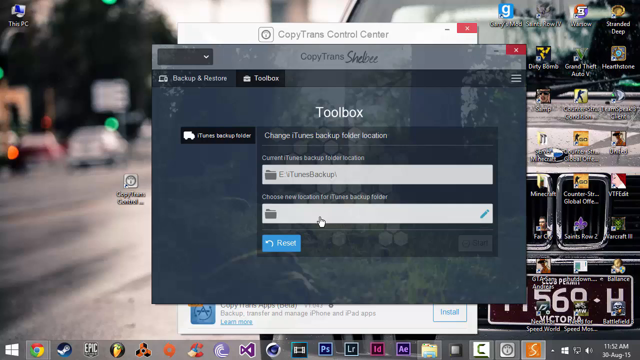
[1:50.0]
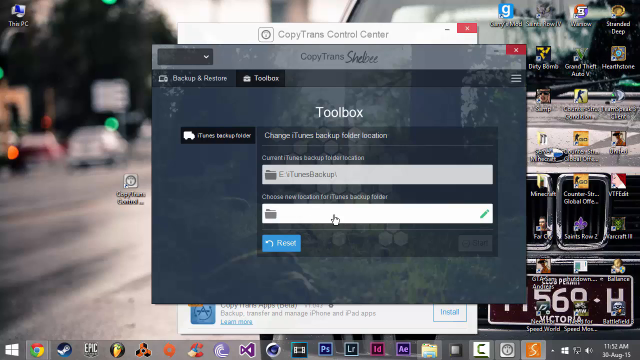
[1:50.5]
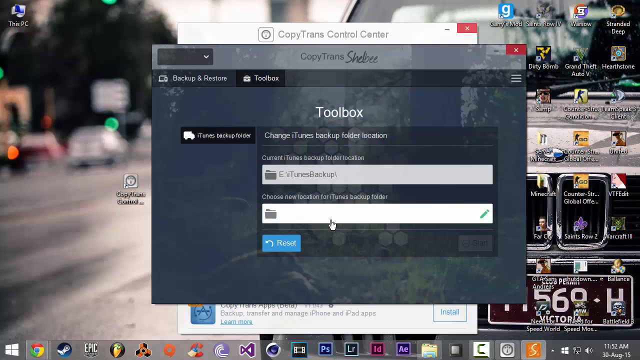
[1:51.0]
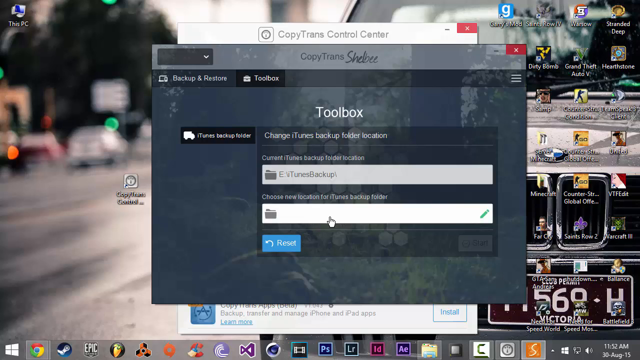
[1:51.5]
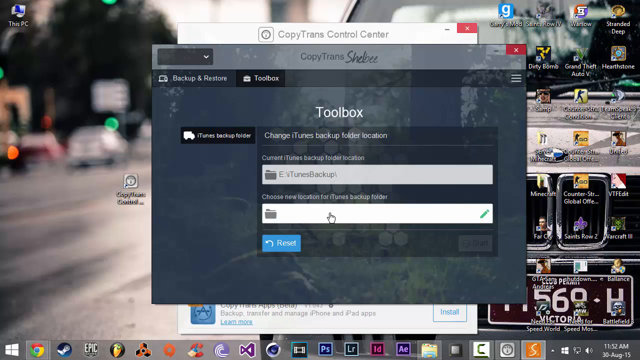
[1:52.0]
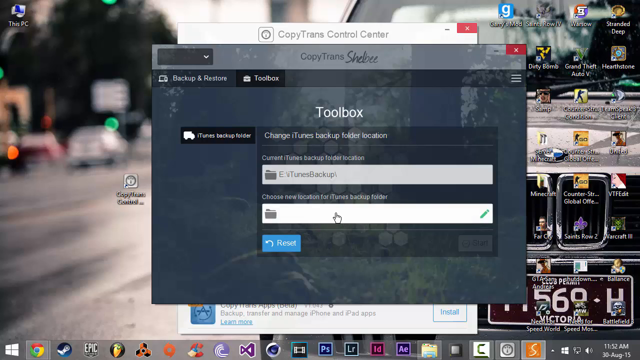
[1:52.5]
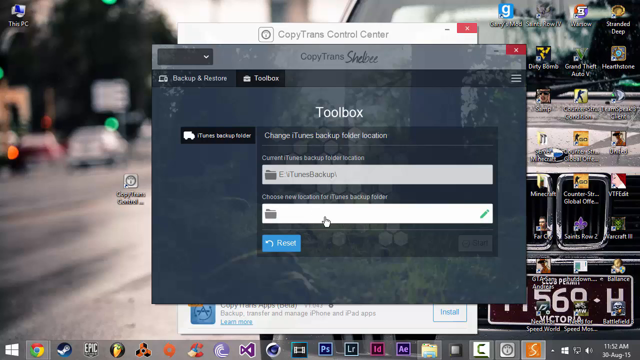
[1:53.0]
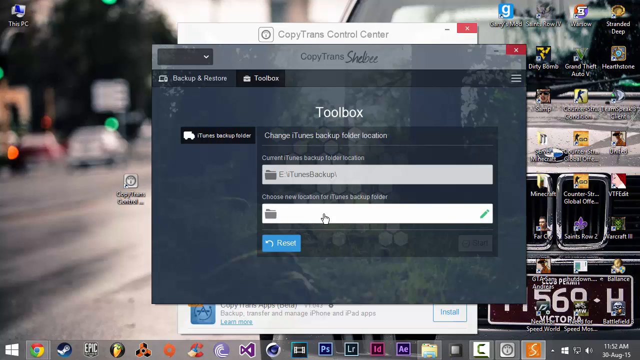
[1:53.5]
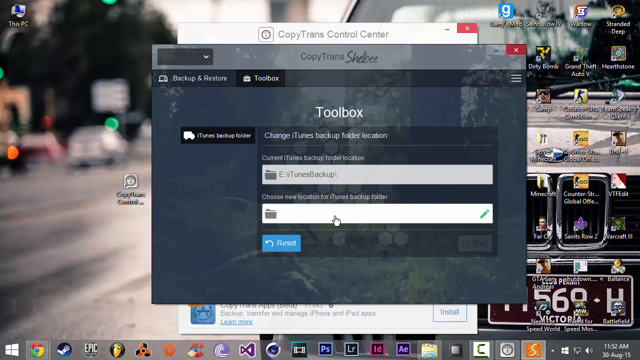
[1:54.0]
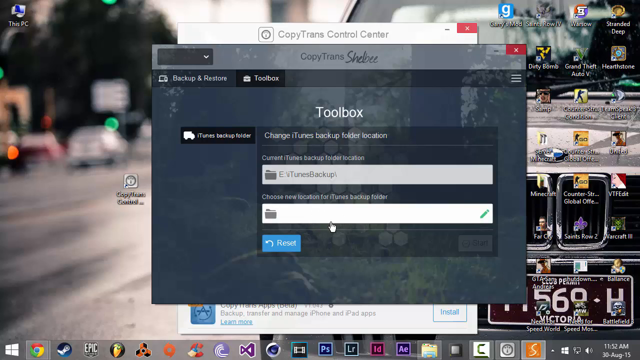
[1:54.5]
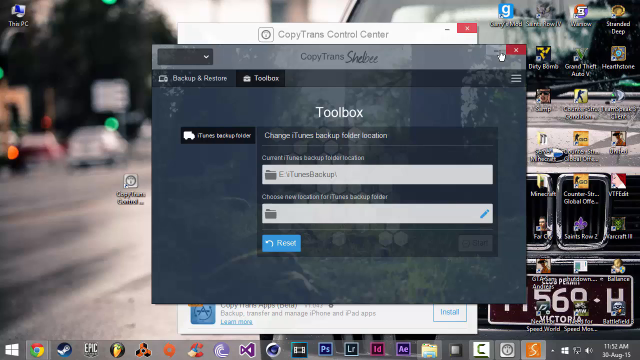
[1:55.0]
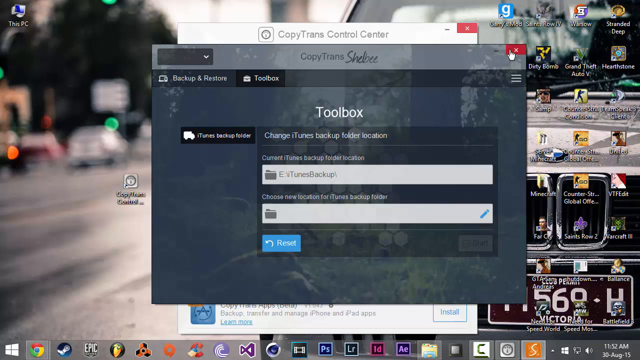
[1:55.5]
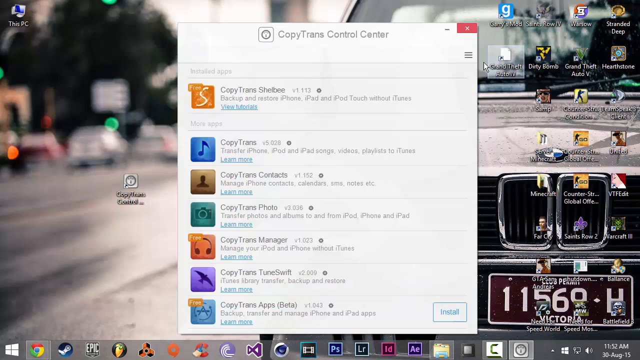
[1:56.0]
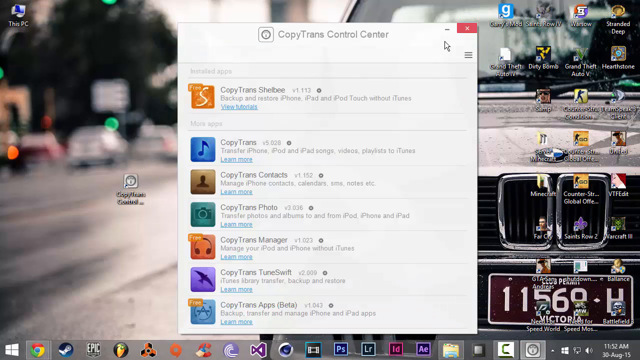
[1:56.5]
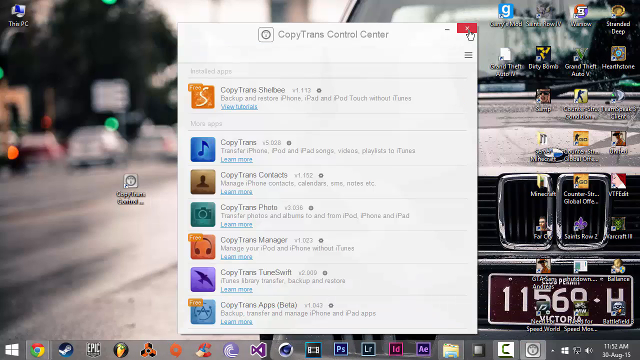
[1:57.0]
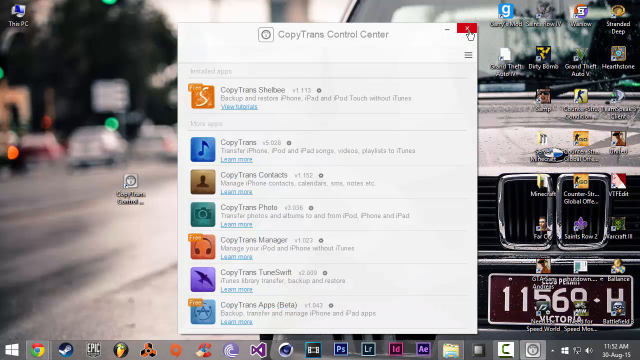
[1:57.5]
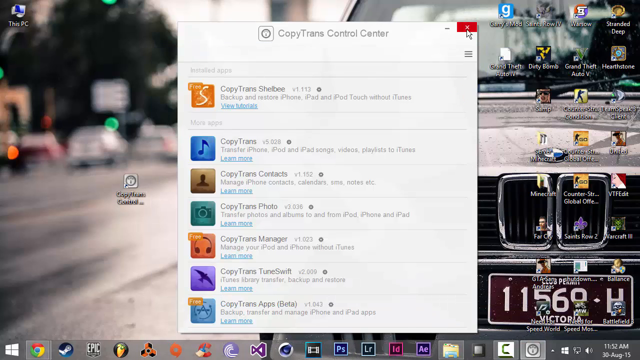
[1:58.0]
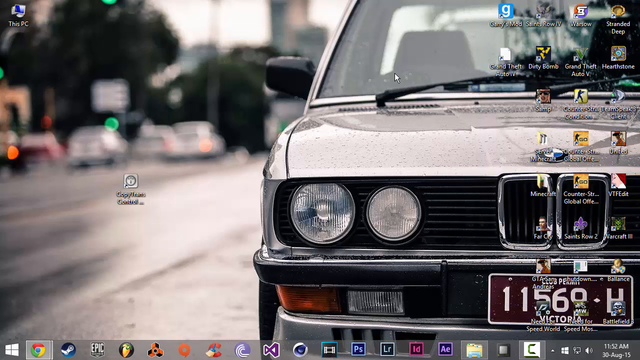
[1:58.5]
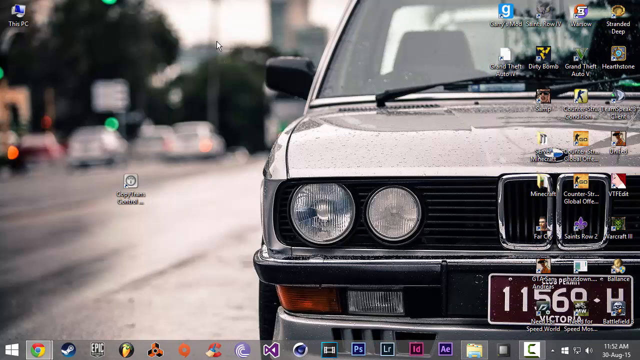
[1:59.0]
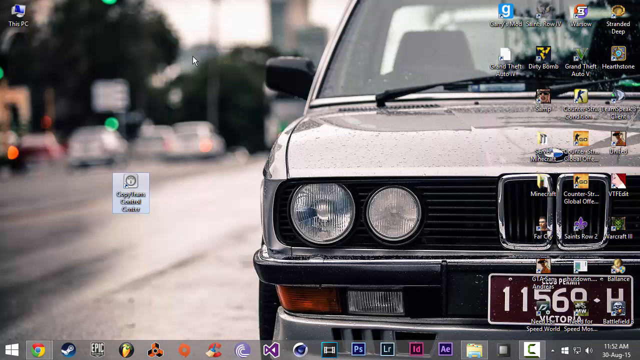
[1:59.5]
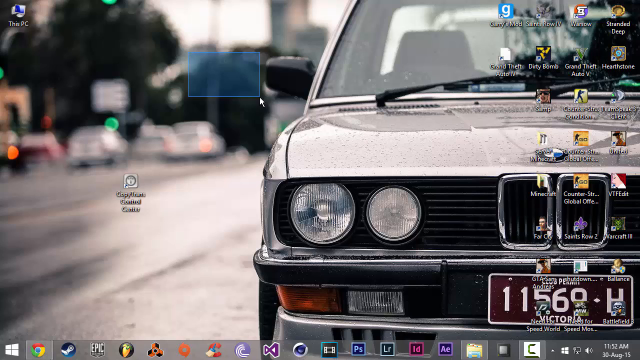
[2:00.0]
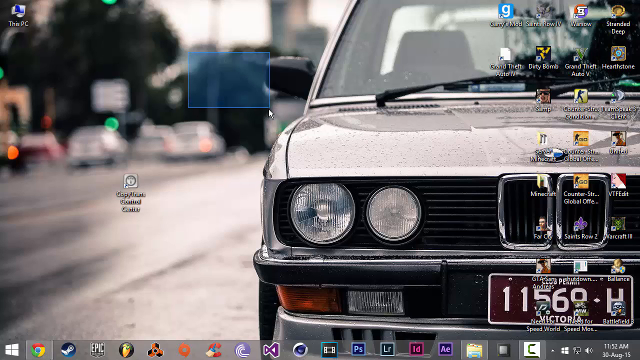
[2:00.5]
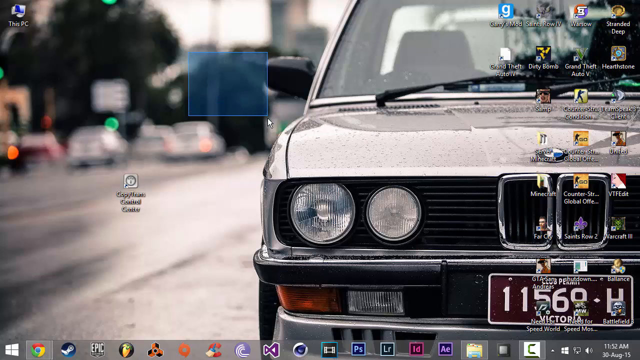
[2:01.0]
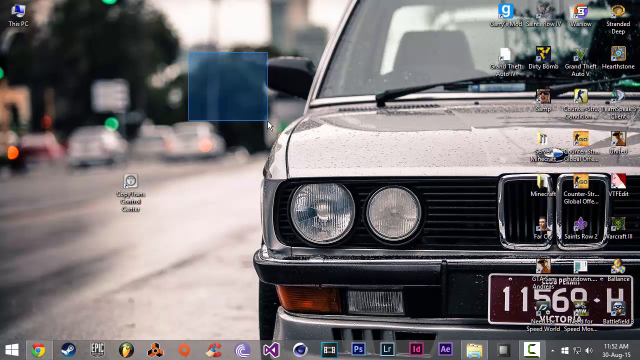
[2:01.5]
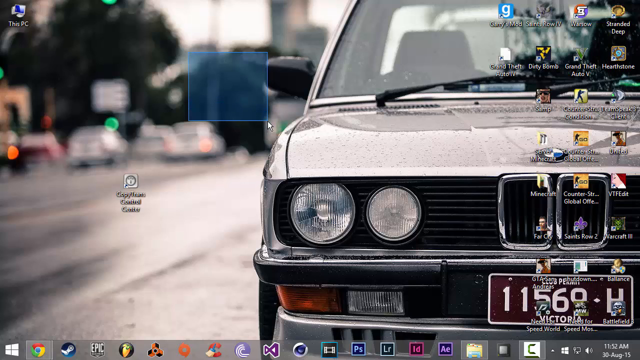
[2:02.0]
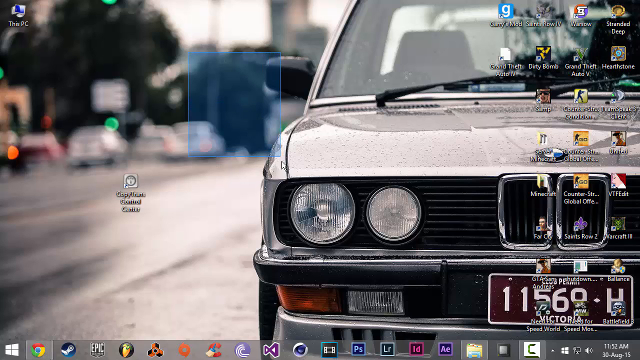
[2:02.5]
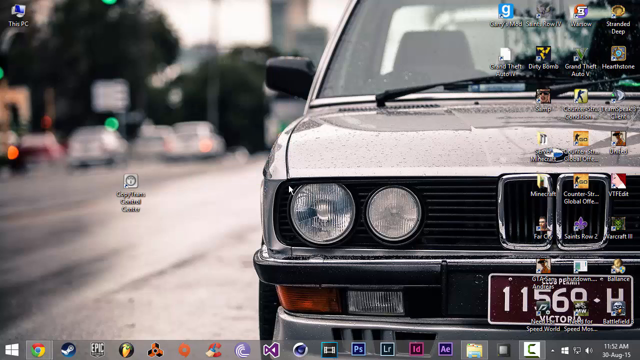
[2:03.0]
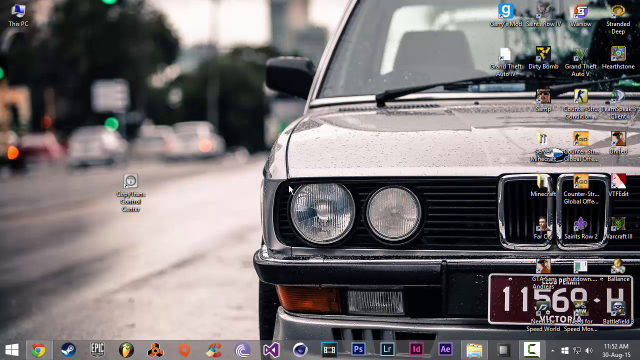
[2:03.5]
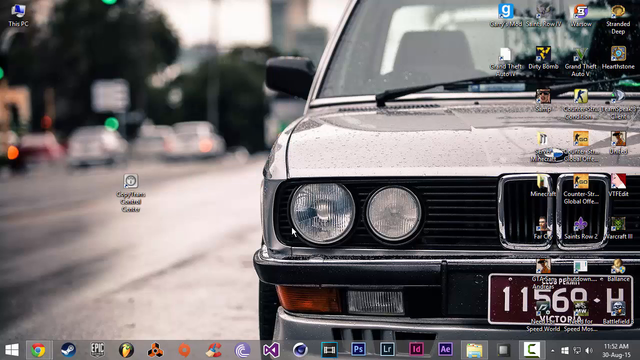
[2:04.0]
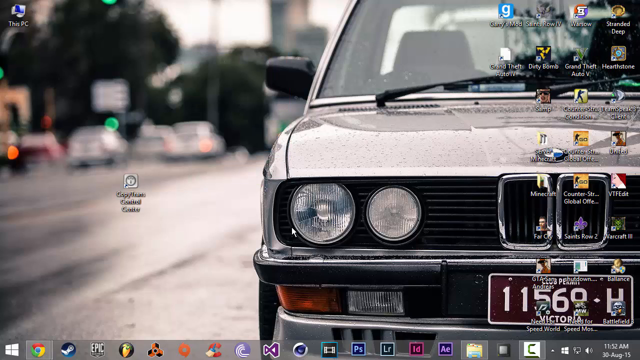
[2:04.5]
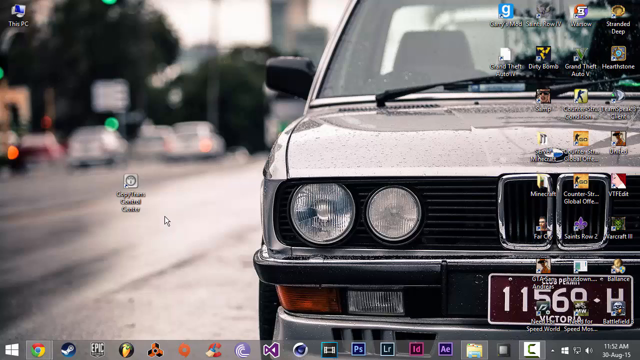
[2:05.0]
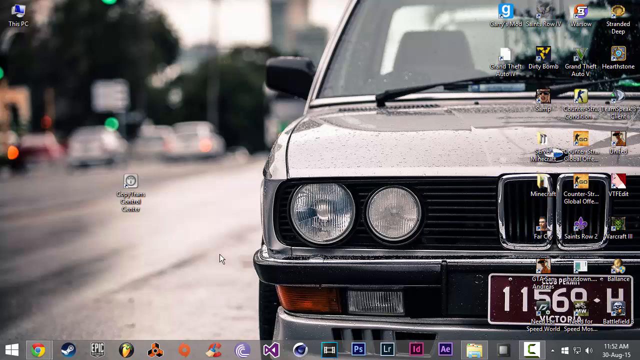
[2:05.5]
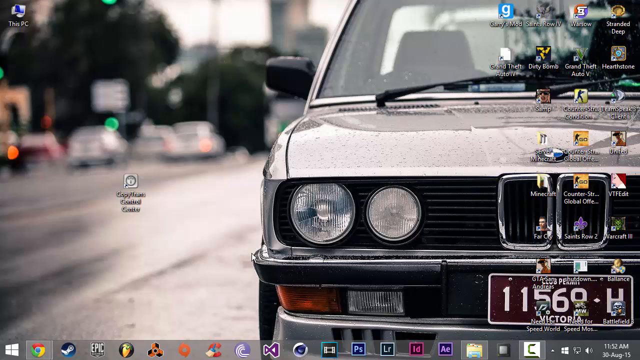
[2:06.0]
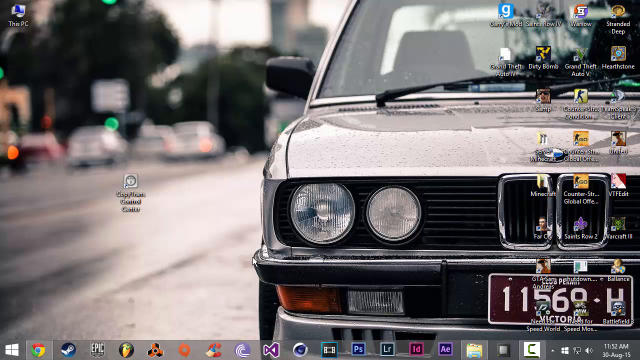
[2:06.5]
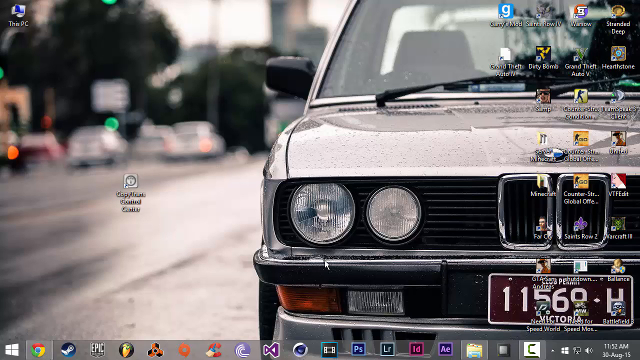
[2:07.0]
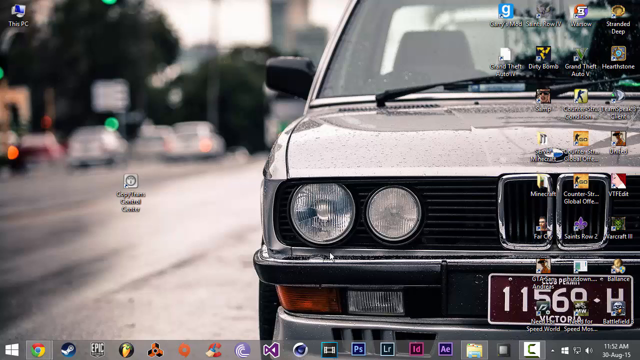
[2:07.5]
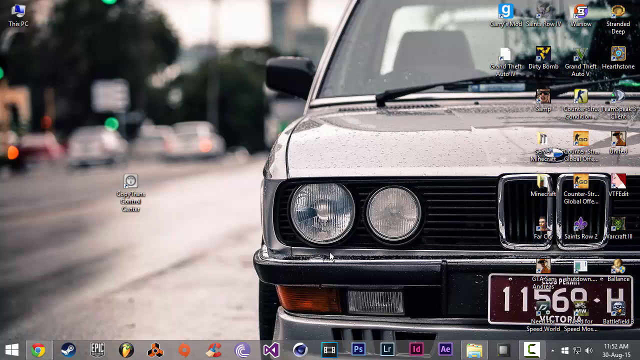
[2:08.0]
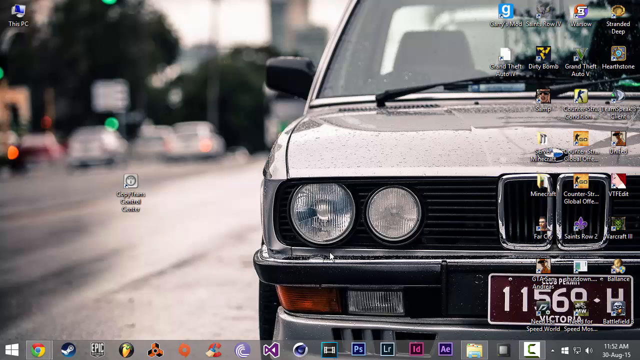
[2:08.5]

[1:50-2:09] A window open on a person's computer screen says "toolbox" in white, with two input fields underneath and a blue button that says "reset" in white text. The cursor, which kind of looks like a hand pointing with its index finger, hovers over the second input field. The user moves the cursor all the way up to the right corner of the window, where there is a burgundy X button, and clicks it; the window goes away and another window that was behind it becomes visible. They seem to close that one as well; it also has a burgundy button with a white X in the top right corner. The window disappears, revealing the home screen, whose wallpaper shows a street with the BMW parked on the side. It looks like it has been raining, and there also looks to be a water drop on the car. With the cursor, the user seems to create a kind of see-through blue box.